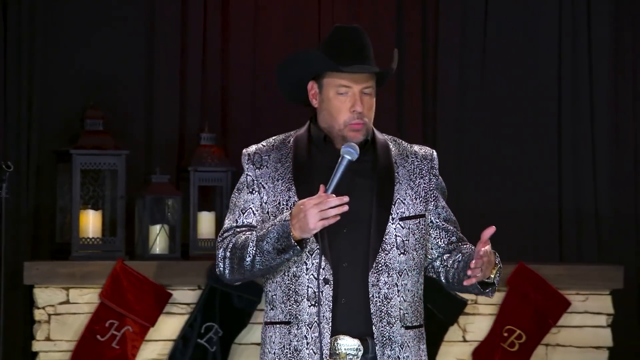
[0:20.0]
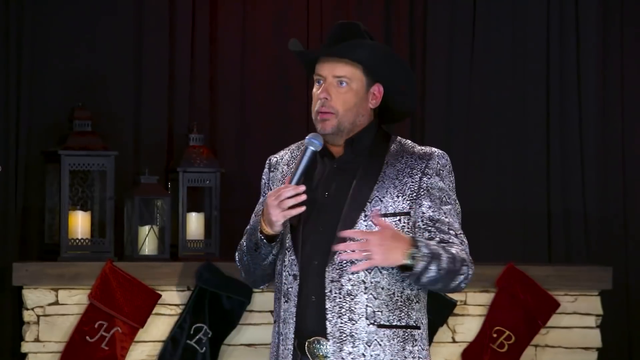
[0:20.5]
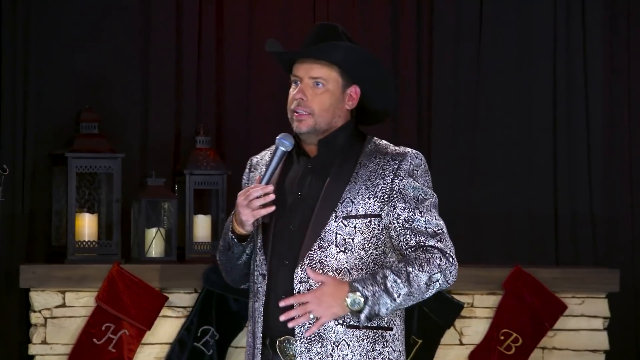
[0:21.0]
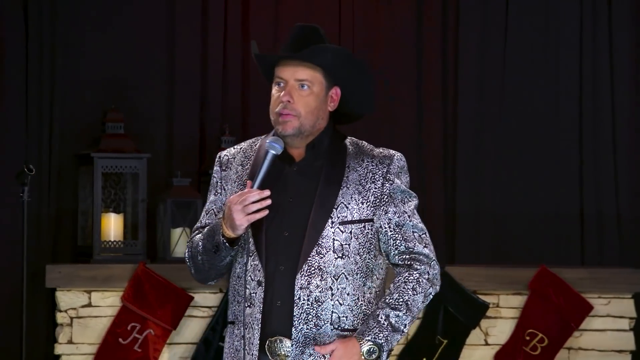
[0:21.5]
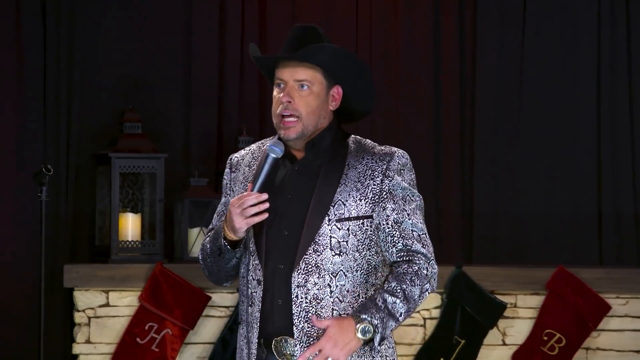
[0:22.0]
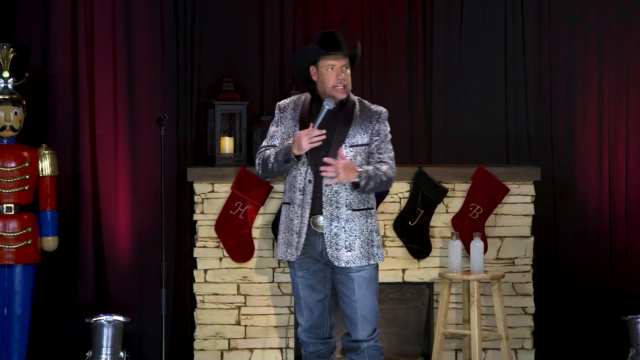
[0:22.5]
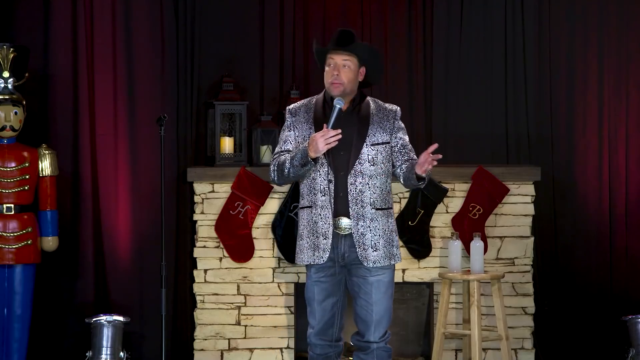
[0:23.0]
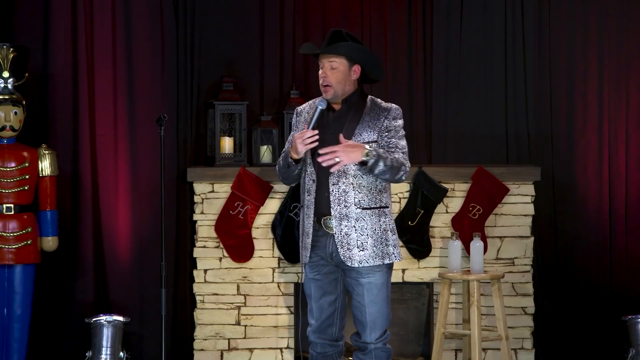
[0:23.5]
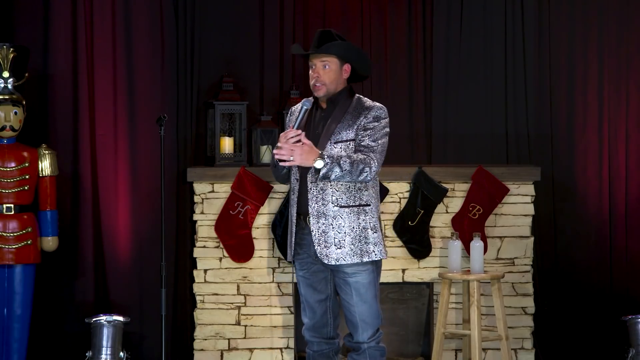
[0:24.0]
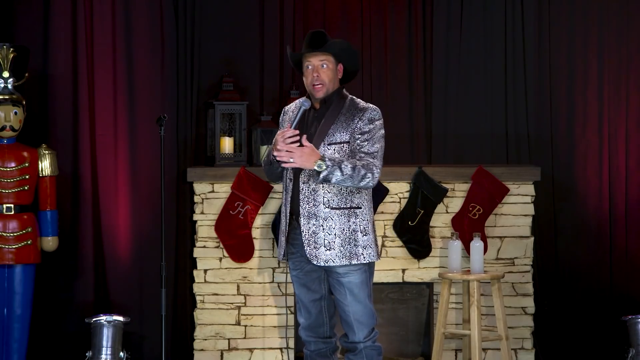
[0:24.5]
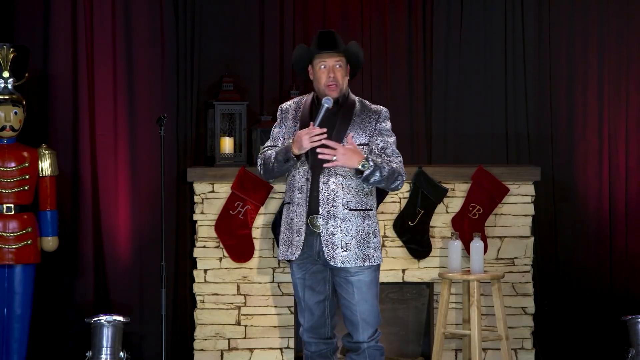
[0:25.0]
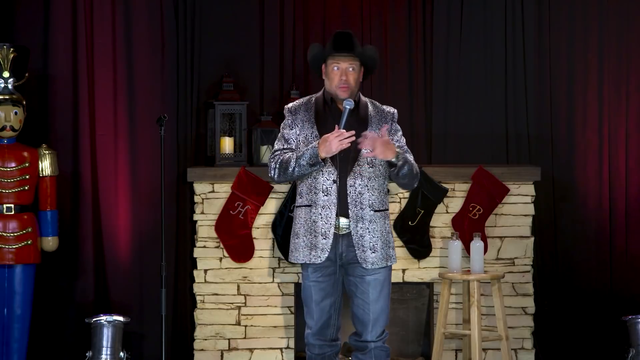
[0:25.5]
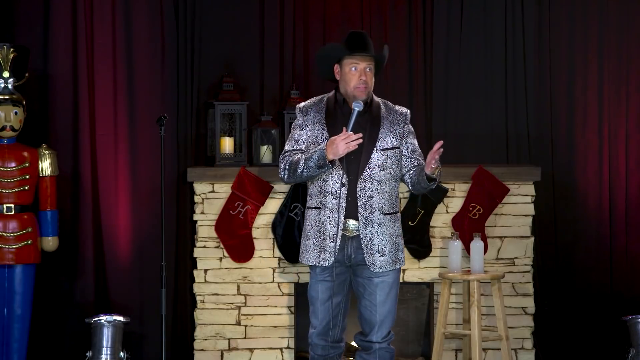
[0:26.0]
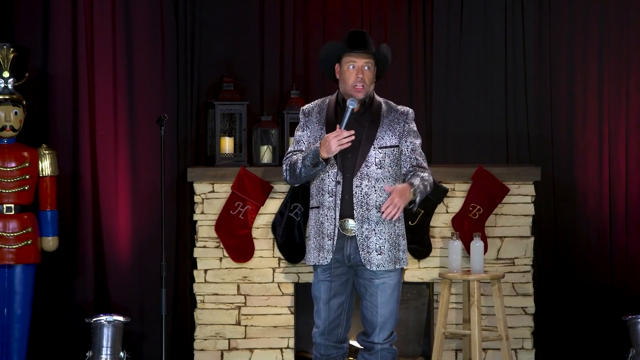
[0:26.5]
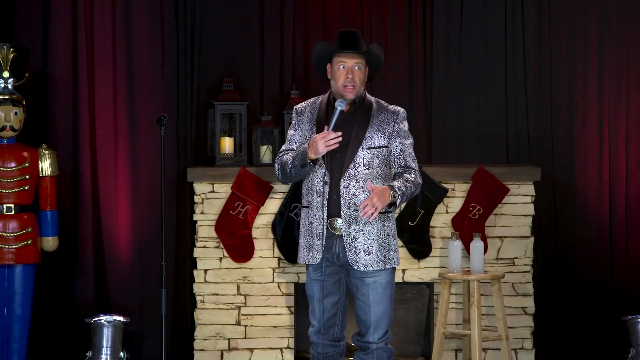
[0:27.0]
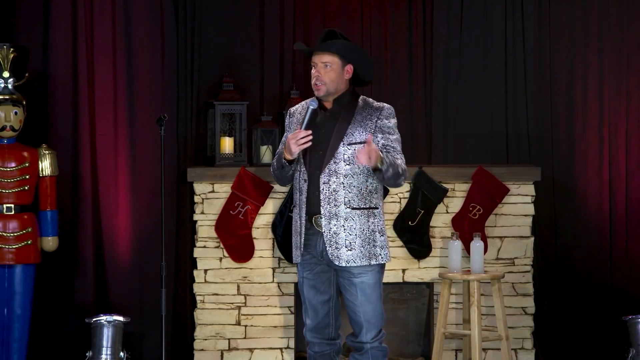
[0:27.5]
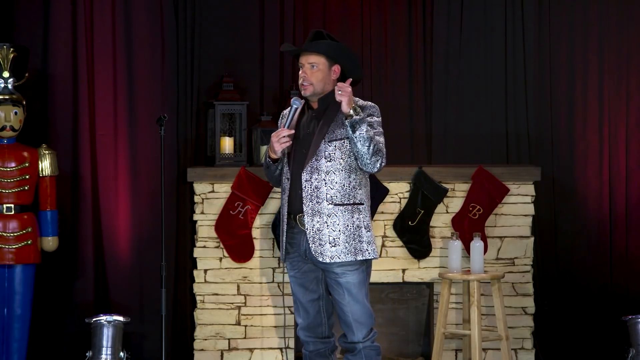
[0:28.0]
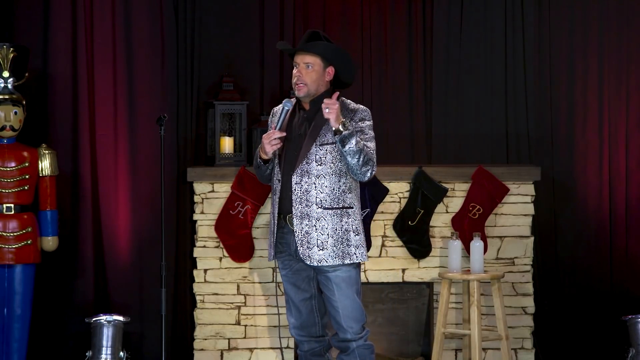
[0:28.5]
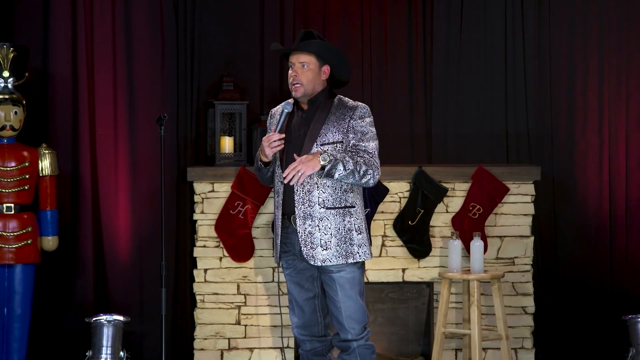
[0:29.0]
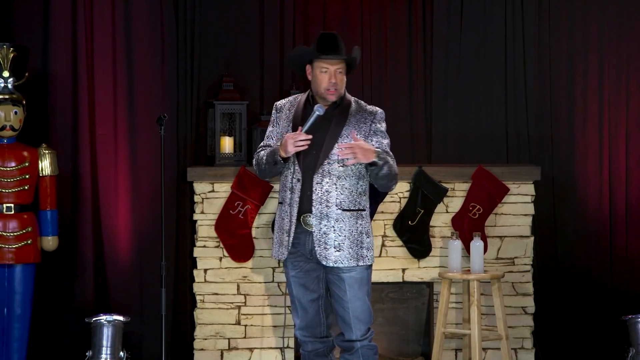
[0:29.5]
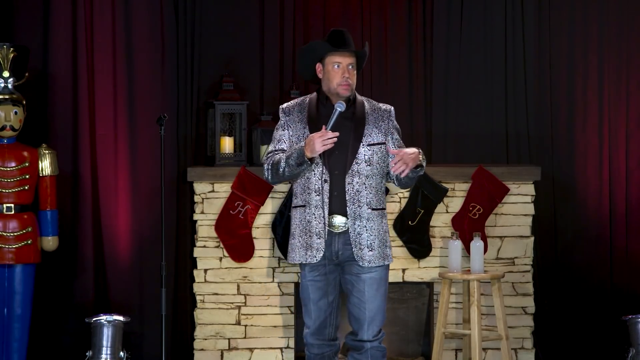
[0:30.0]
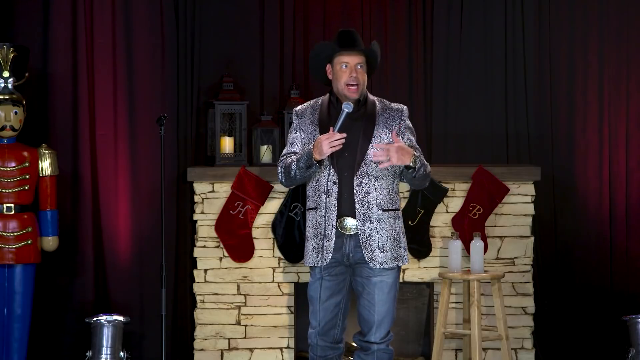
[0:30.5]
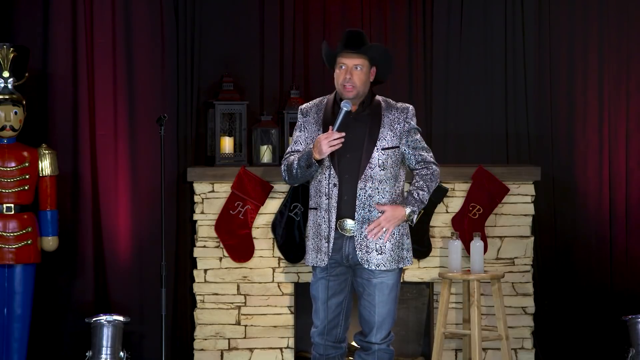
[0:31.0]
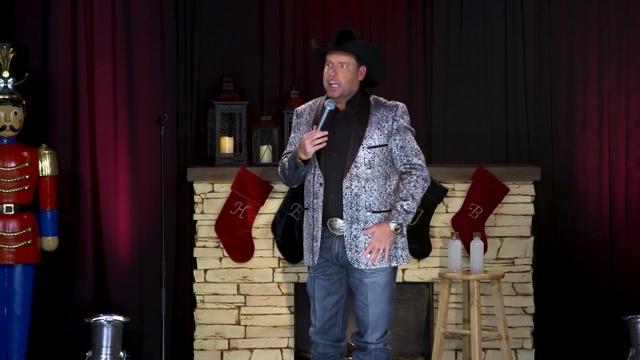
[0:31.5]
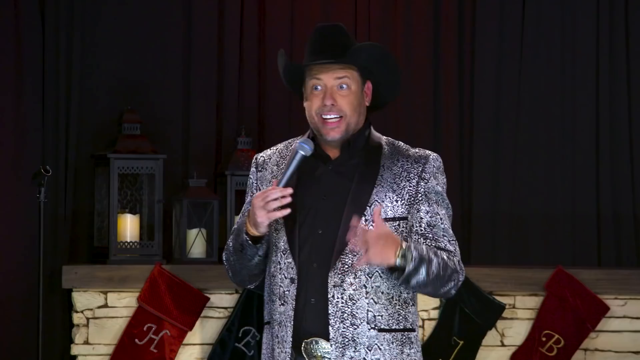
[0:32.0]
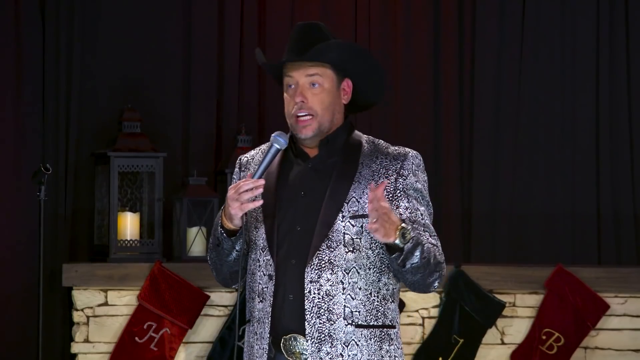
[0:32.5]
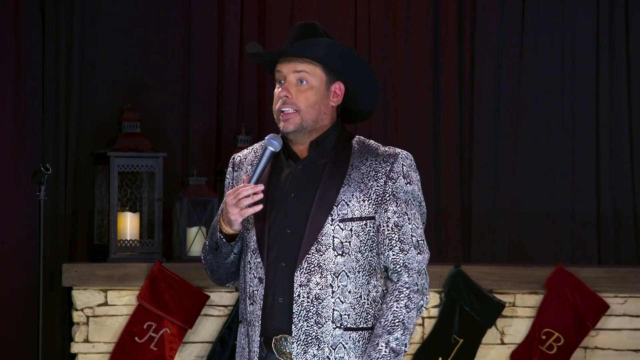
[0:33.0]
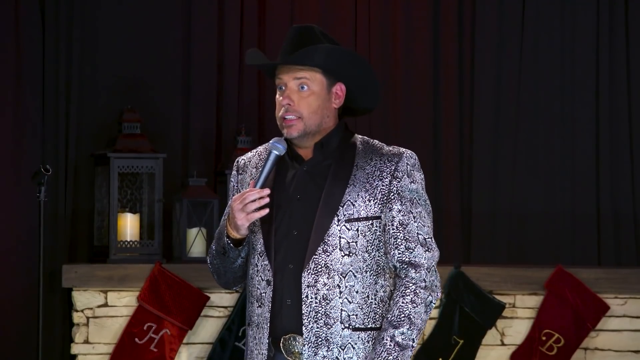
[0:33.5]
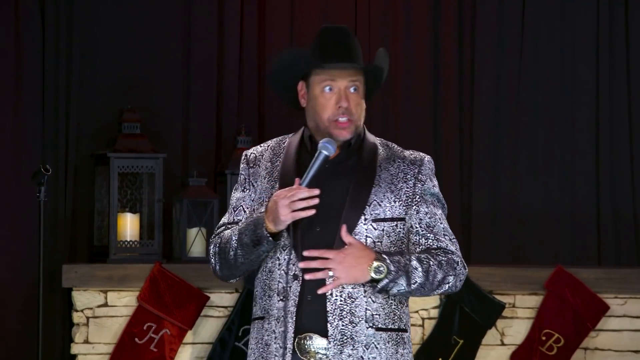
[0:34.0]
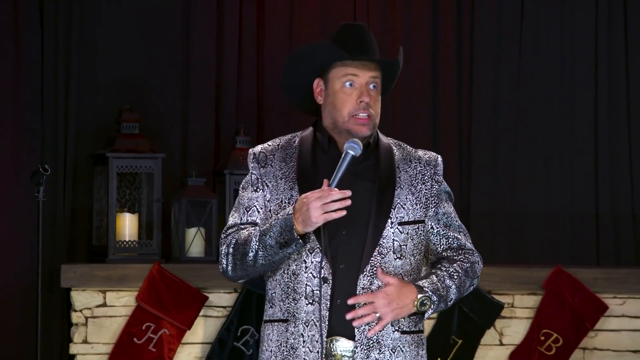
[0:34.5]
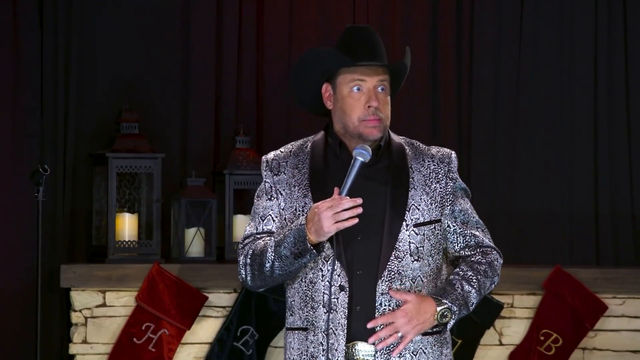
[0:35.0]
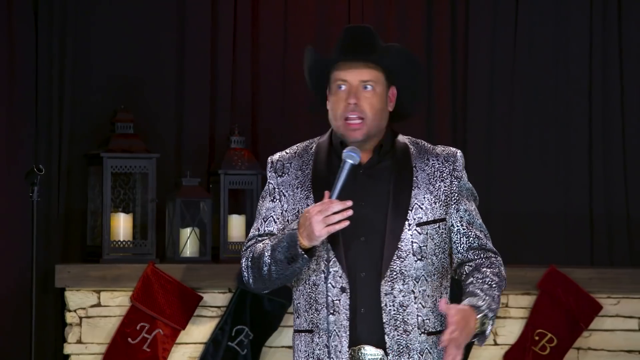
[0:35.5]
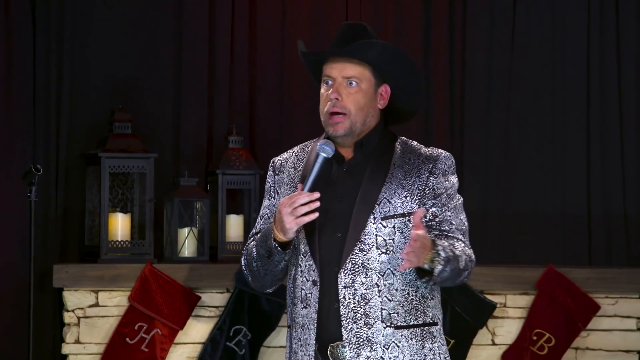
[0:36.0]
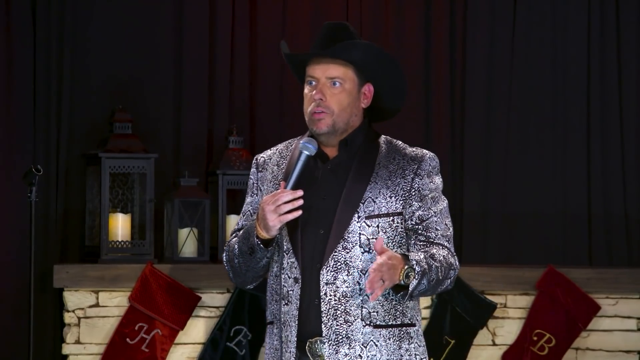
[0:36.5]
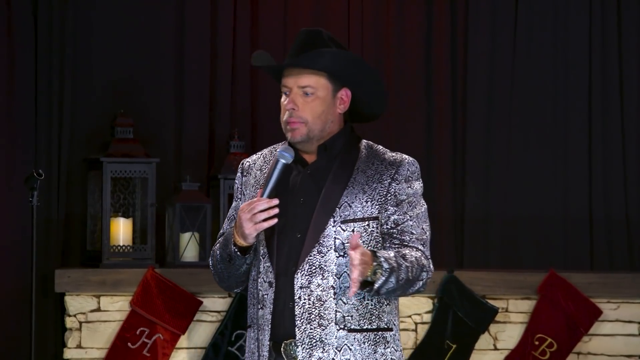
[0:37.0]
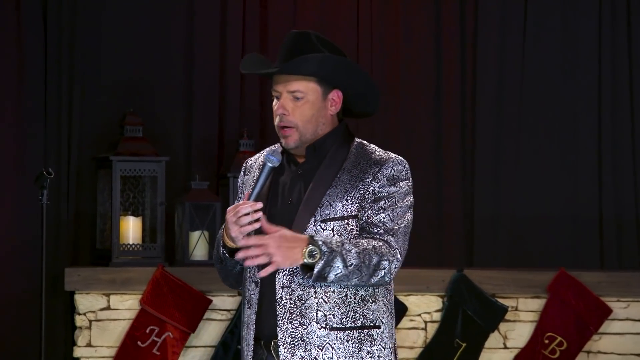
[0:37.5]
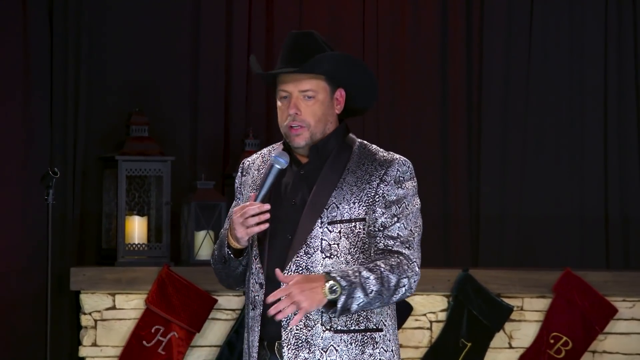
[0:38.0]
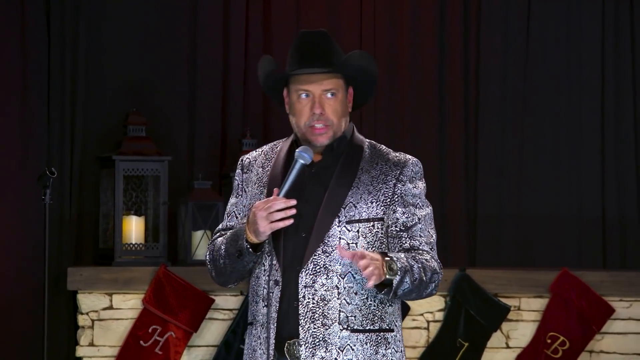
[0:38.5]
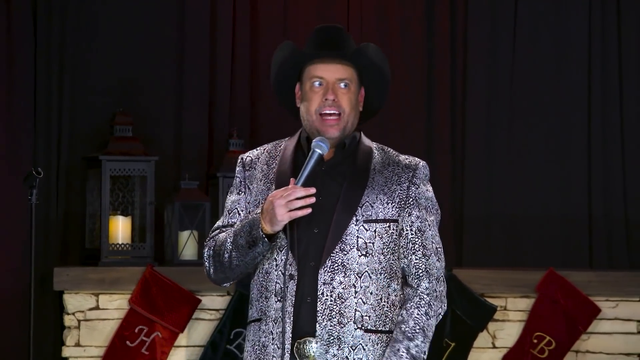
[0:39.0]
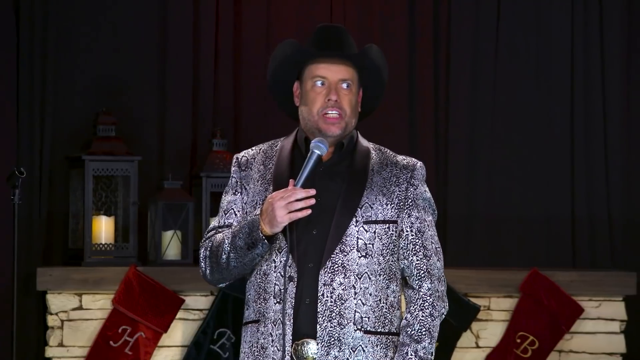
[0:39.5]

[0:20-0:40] The man wearing a watch continues to speak, facing the audience. He wears a grey jacket and a black shirt and speaks into a microphone with a round top and a grey metal bottom. He wears a gold and grey ring on his third finger. He moves back to the top of the stage near the socks, which are labelled H, E, M, J and B; three of the socks are black and two are red. He goes back to the middle of the stage behind three candles, each part of a black box with a red cap, and the curtains in the background are black and red. Finally, he moves his fingers and hands as he speaks.